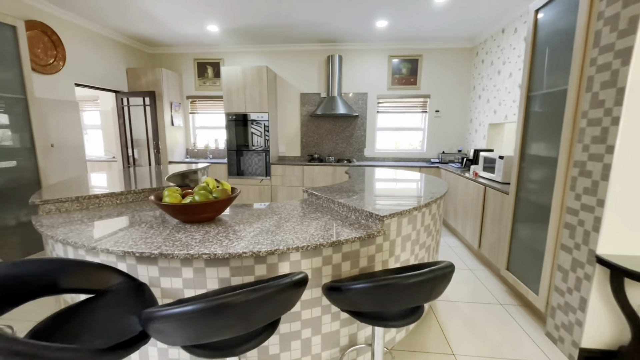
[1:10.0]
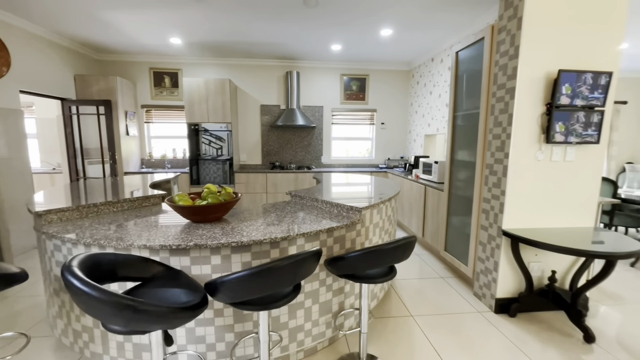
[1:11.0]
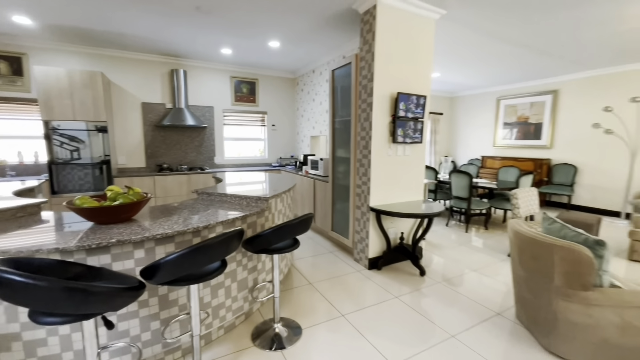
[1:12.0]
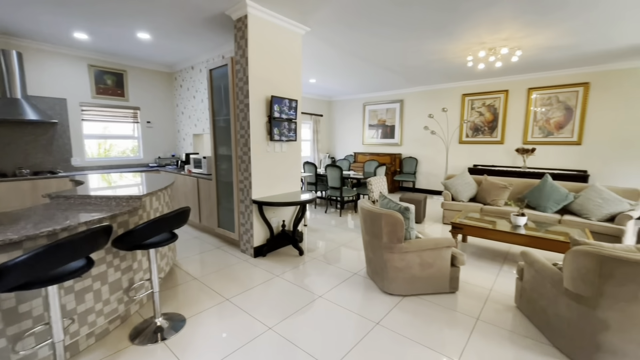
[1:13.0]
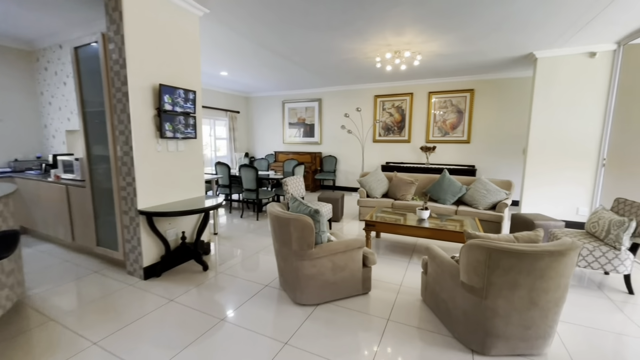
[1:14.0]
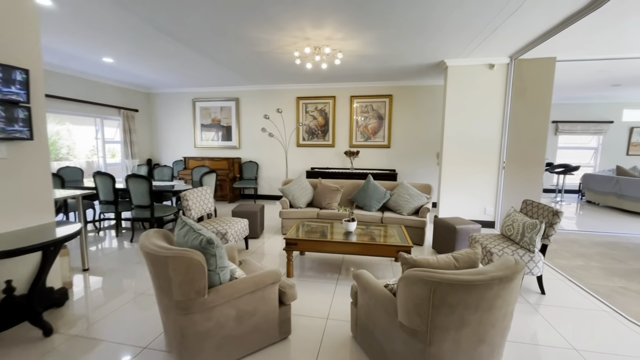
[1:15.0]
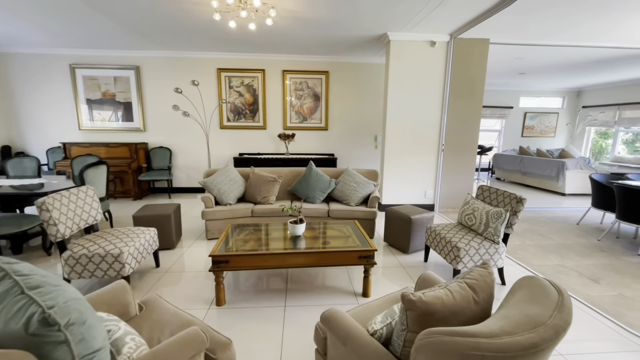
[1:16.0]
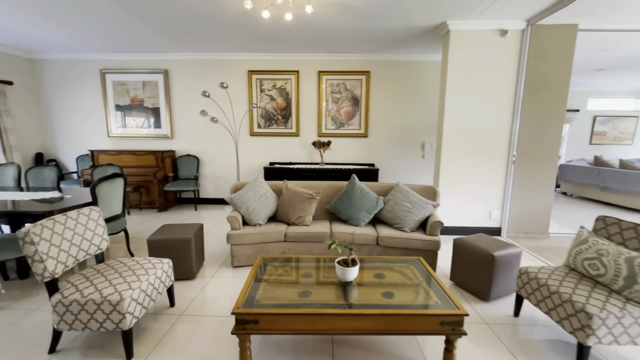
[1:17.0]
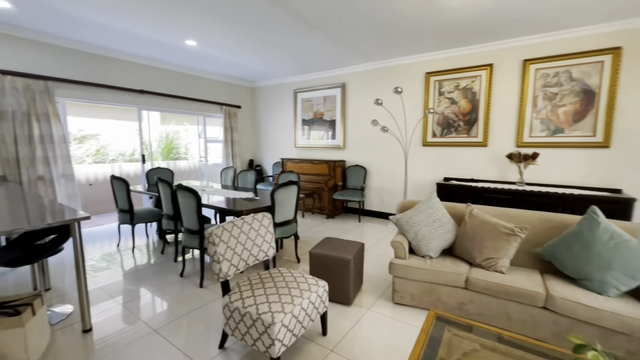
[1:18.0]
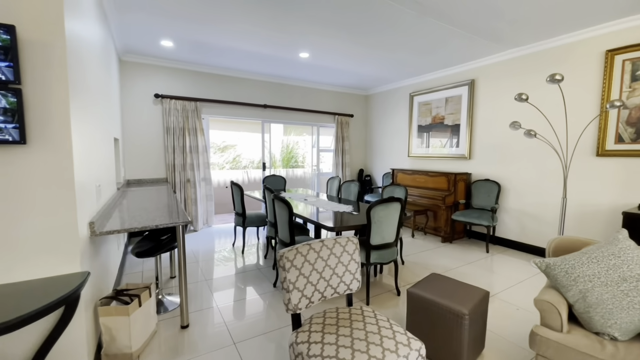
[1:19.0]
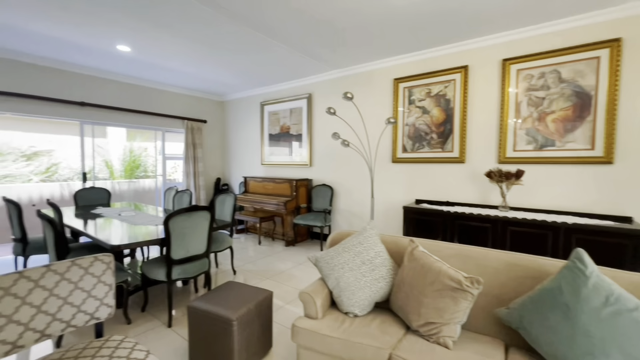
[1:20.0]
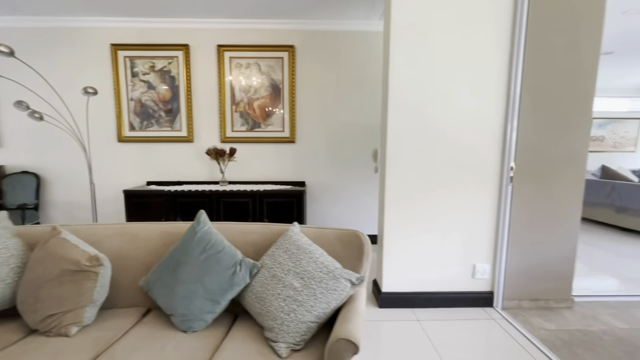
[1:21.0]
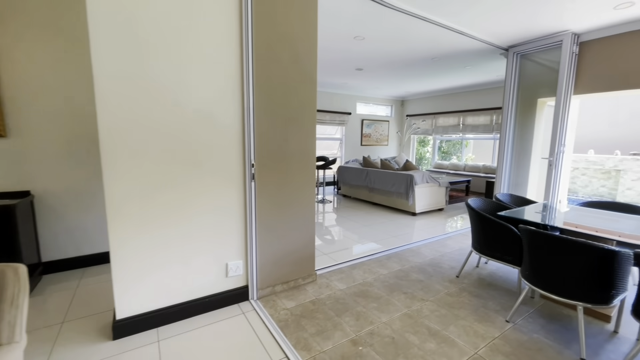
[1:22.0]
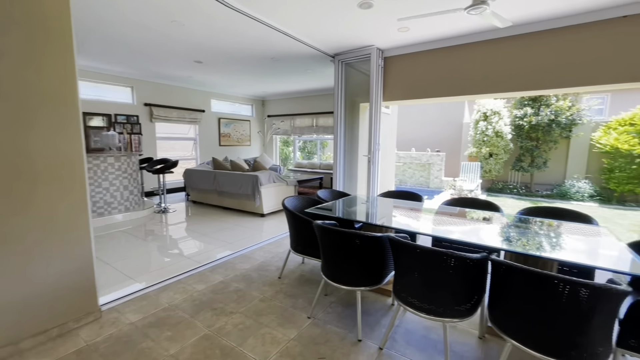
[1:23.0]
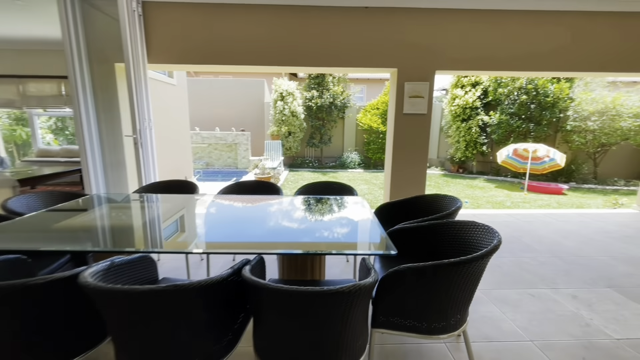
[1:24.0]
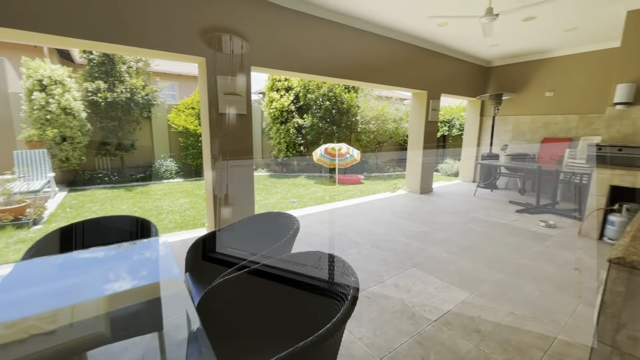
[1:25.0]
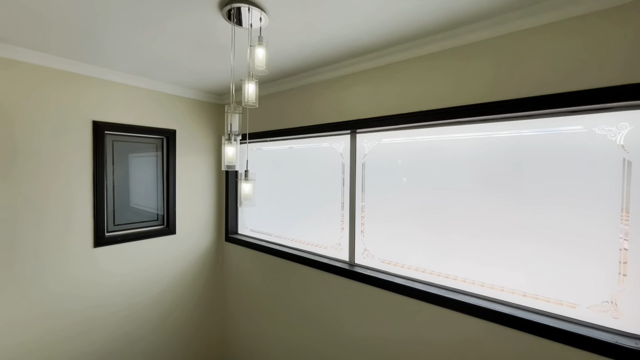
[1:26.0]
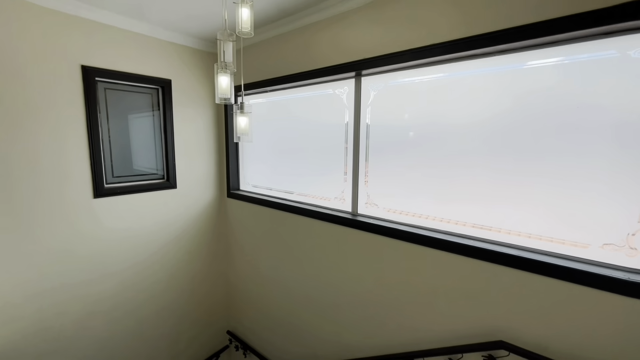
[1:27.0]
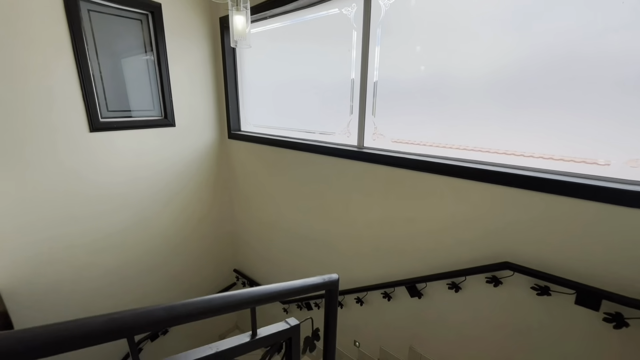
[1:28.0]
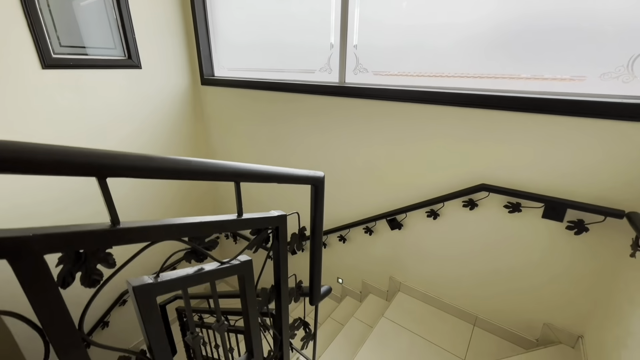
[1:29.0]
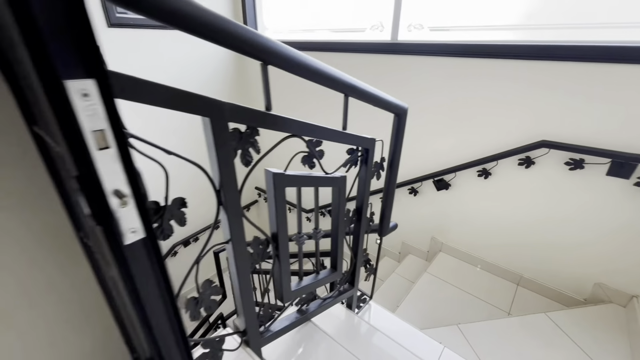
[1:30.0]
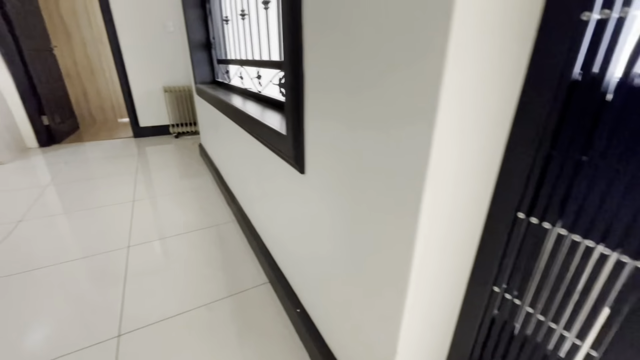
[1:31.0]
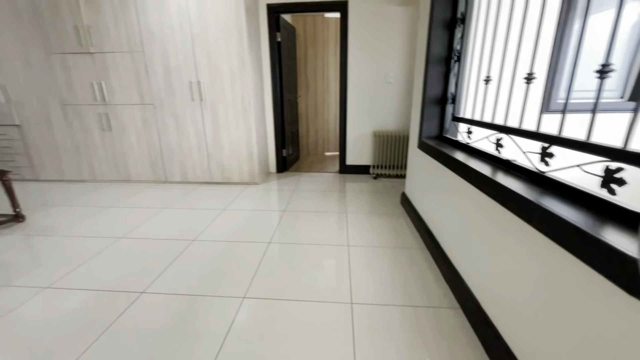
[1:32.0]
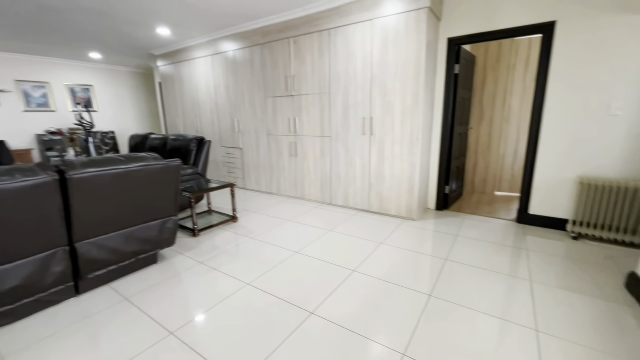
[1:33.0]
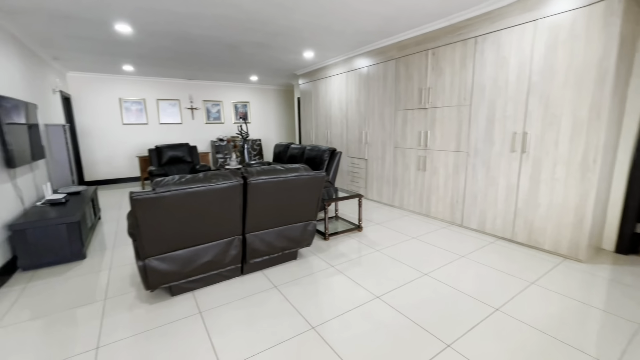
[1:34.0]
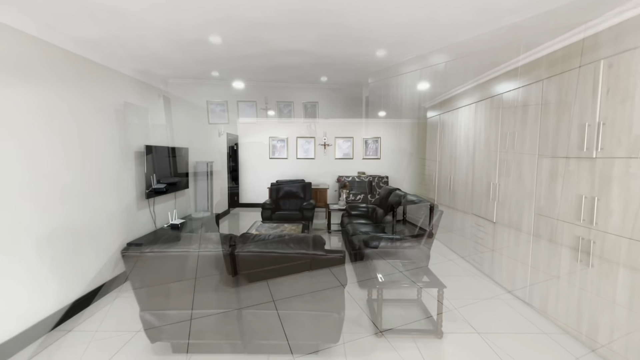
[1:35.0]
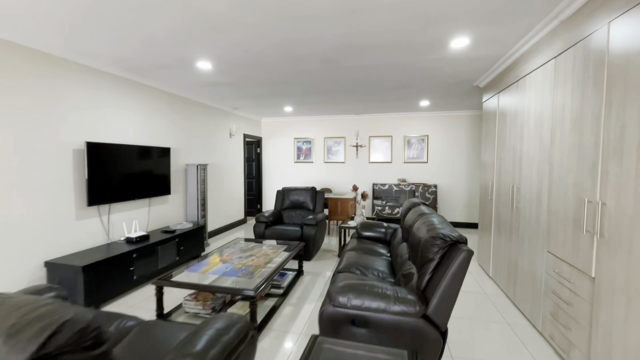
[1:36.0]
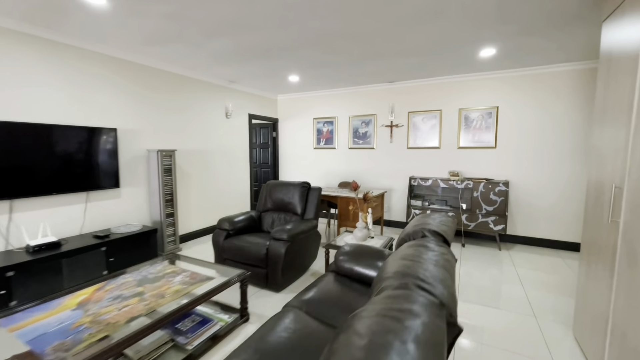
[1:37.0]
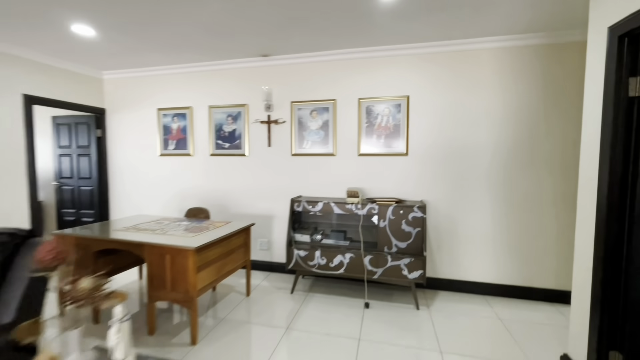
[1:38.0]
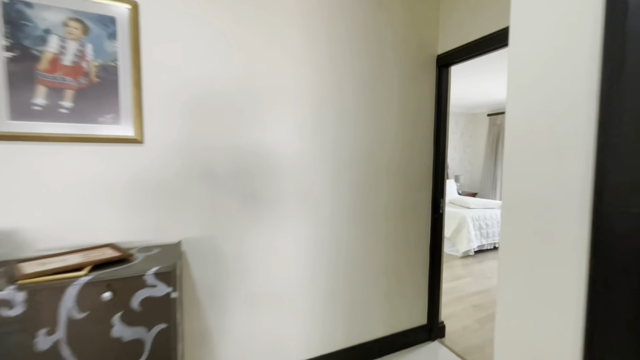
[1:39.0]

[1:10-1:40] The view starts in the kitchen area and zooms out into the living room, where what looks to be a piano is visible. It moves between the different spaces on the first floor, then shifts to a point of view from the second floor, as if having just gone up the stairs, looking down the stairs. The handrail of the stairs has a kind of black leaves design. The first room upstairs appears to have dark brown sofa chairs, two nearer the camera, two to the right of those and one opposite, all surrounding a little kind of black piece of furniture, with a TV hung on the wall. Moving closer, a table between the sofa chairs has a little space below it for things, where there are maybe some books or board games.